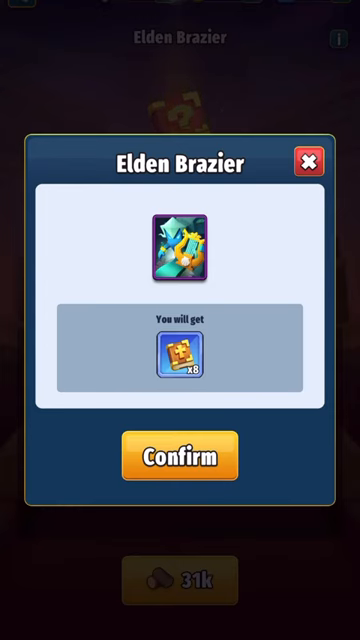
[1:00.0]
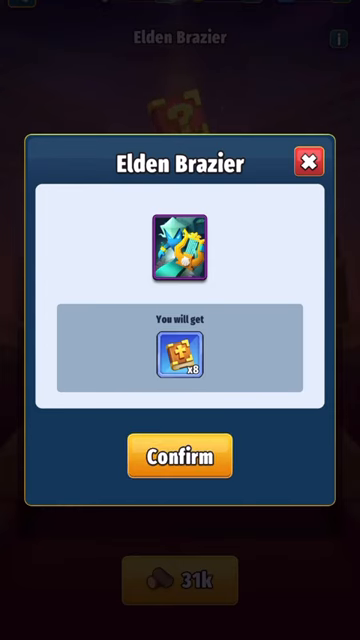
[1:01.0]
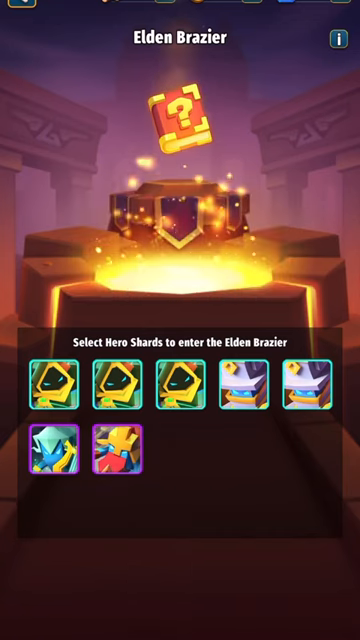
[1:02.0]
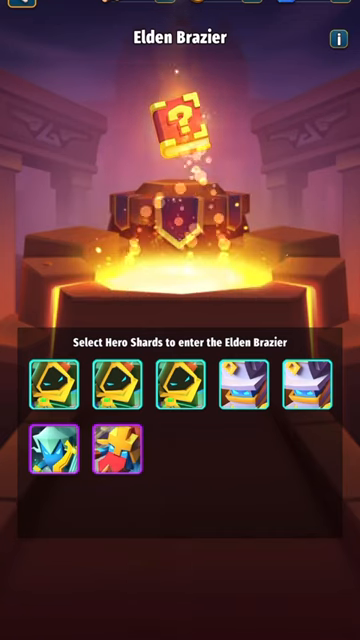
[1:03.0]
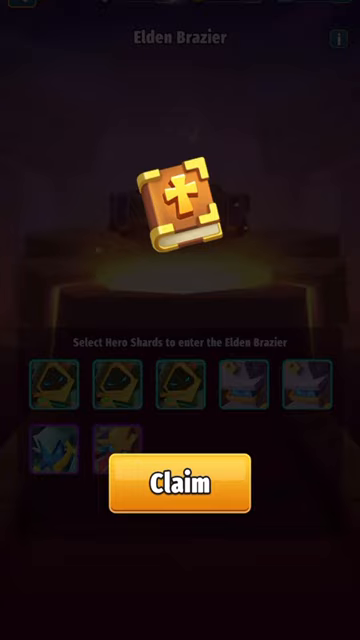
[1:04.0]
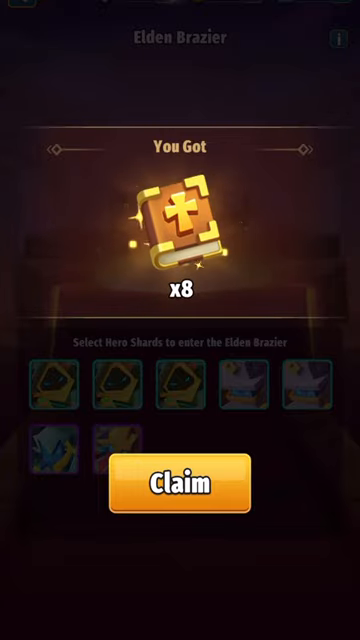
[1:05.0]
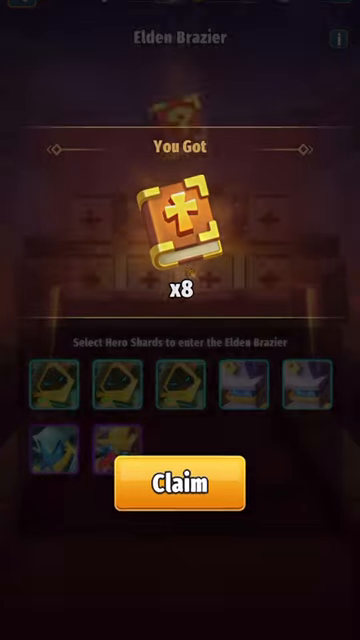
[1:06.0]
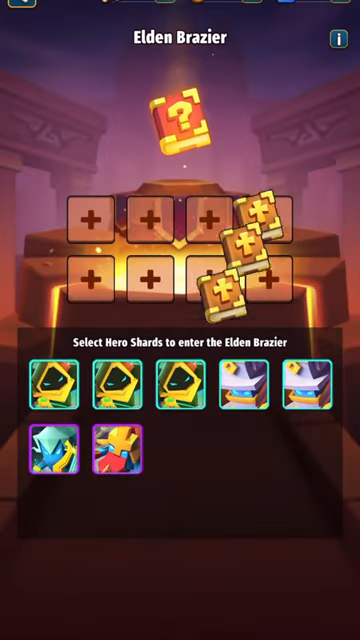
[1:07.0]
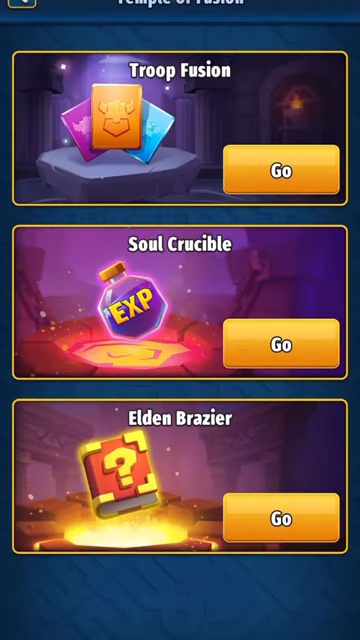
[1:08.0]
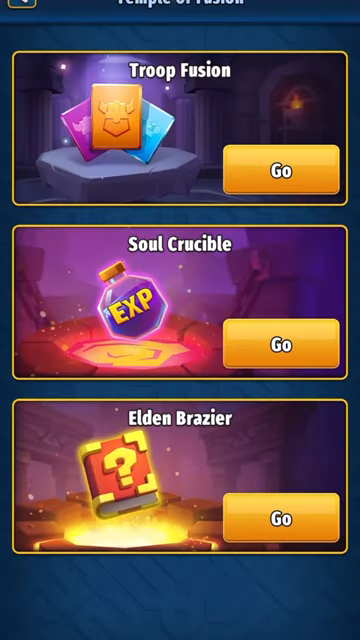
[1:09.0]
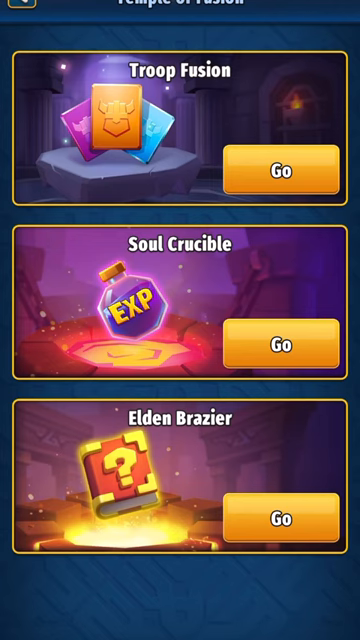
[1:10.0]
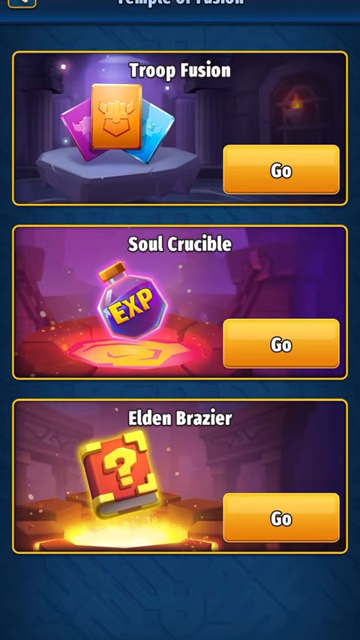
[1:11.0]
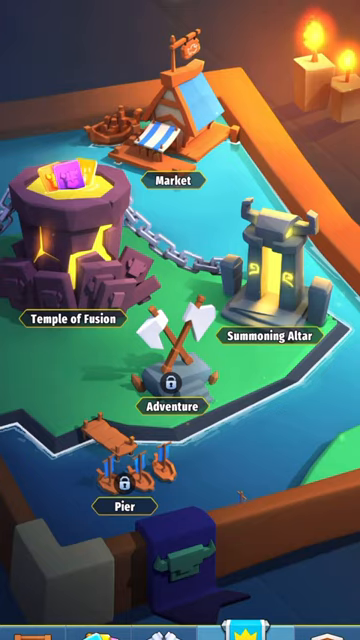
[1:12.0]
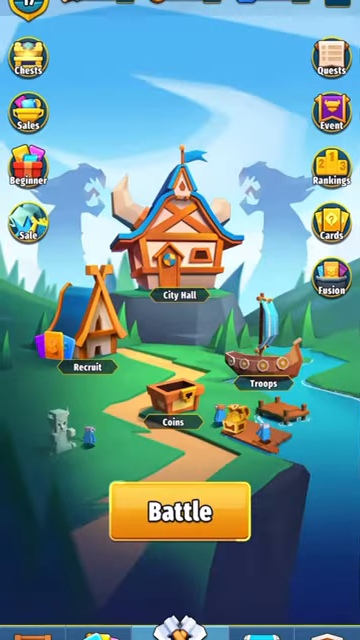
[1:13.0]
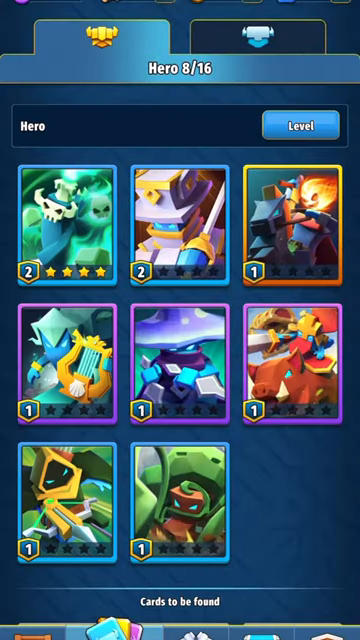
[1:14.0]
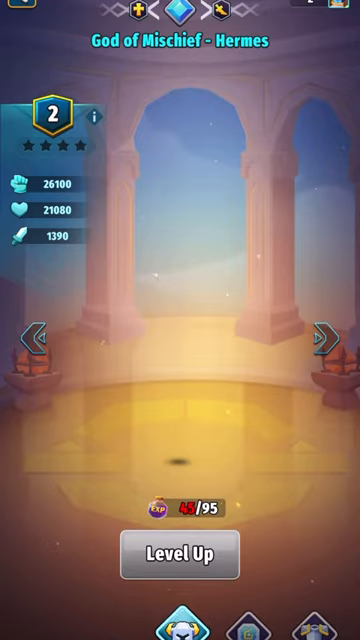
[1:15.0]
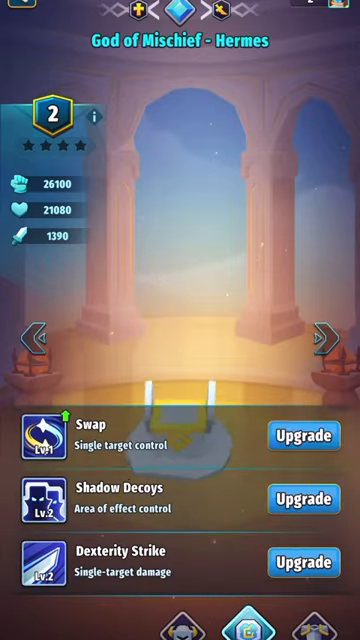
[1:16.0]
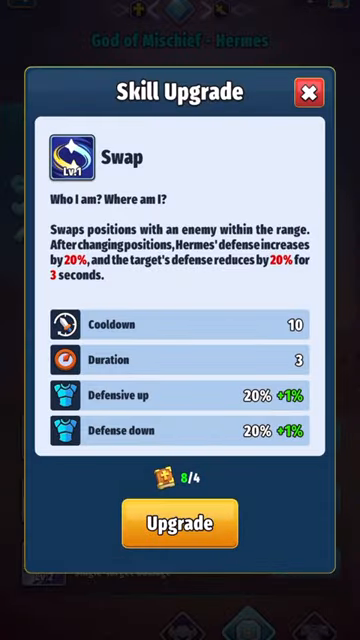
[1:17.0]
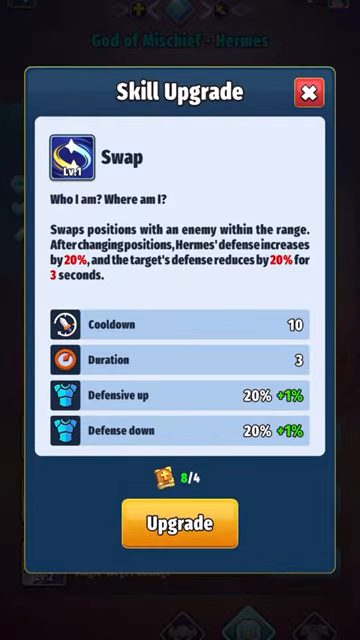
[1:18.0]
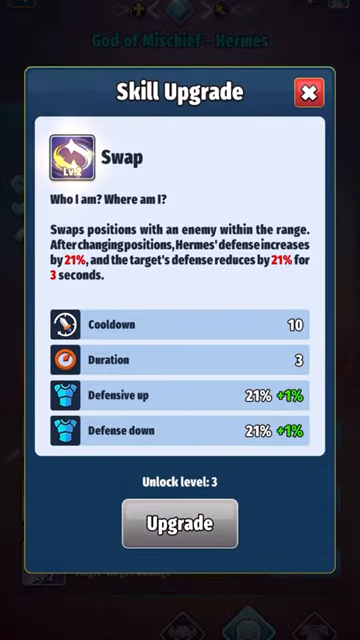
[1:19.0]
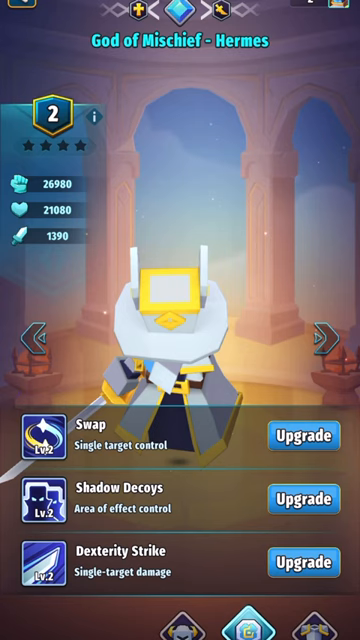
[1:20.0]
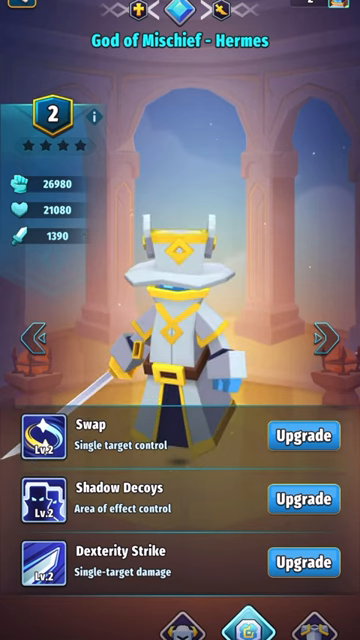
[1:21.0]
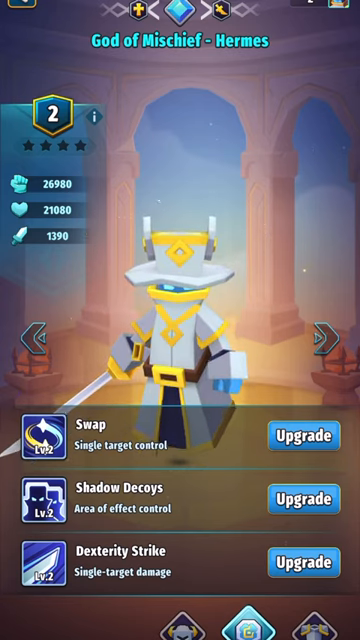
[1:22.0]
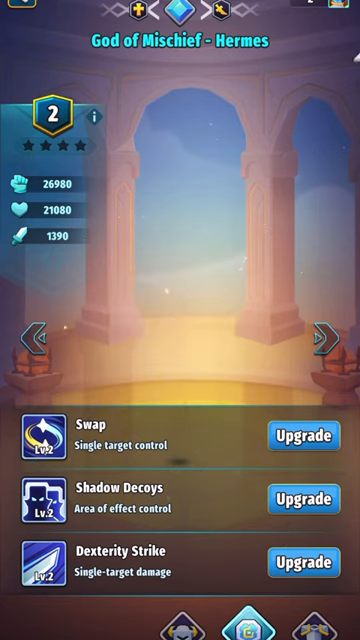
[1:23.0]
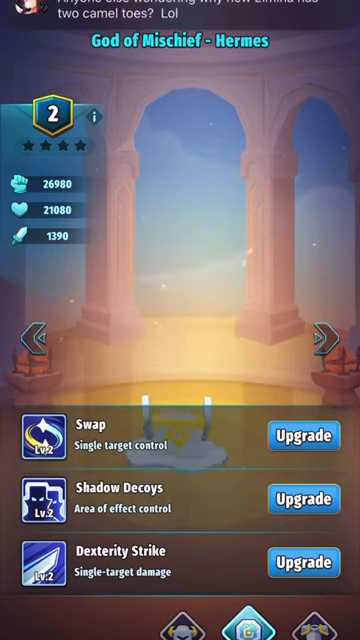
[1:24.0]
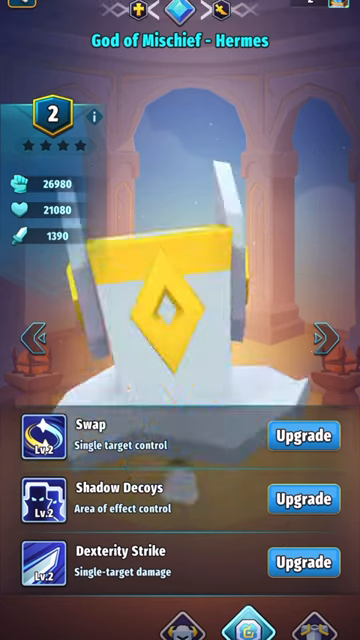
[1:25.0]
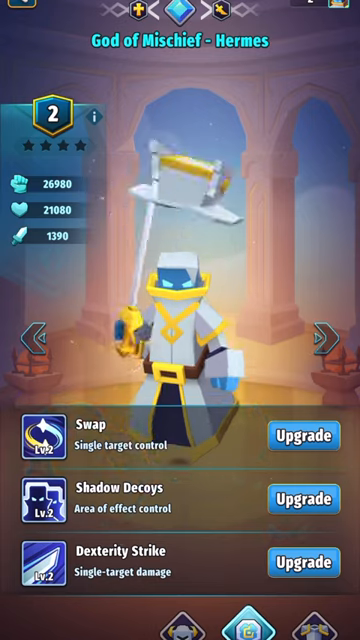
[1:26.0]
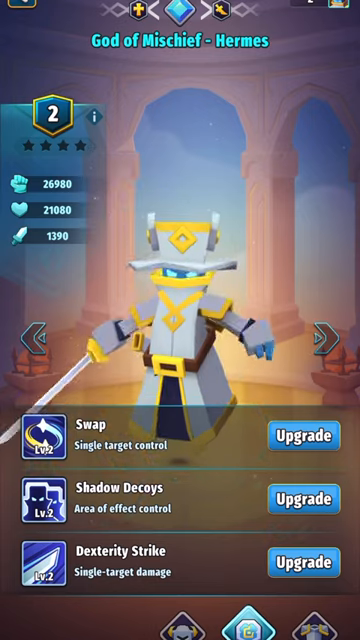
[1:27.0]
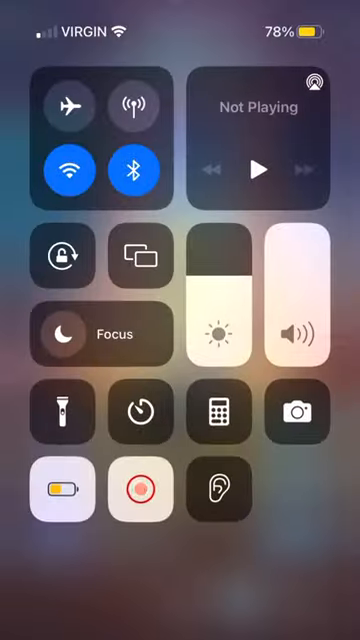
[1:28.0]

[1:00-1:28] The user tries to complete the icon game again, and seems to have possibly completed it, as the icons have gone into the center of the fiery pit. The fire goes up into the book with the question mark. The user receives the eight books that seem to have a cross on them, apparently representing a Bible. The text "you got" is on top and "x8" is on the bottom. Lights or glitter surround the book, which is brown with a gold cross. The books are added to the inventory. The user then goes back to the page with the Temple of Fusion, scrolls back to the home page, and then to the page where the characters are listed, where they seem to start upgrading some of their characters' skills.